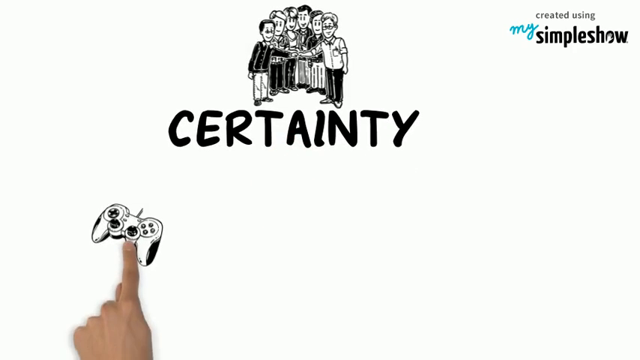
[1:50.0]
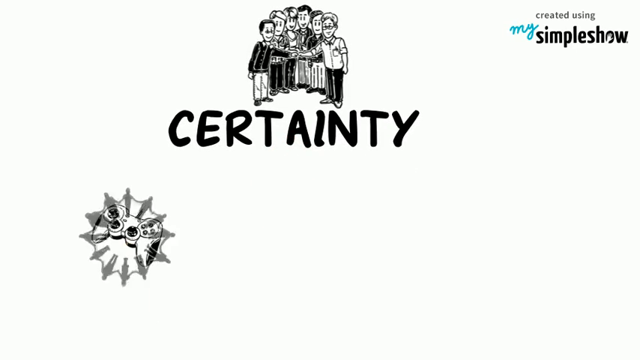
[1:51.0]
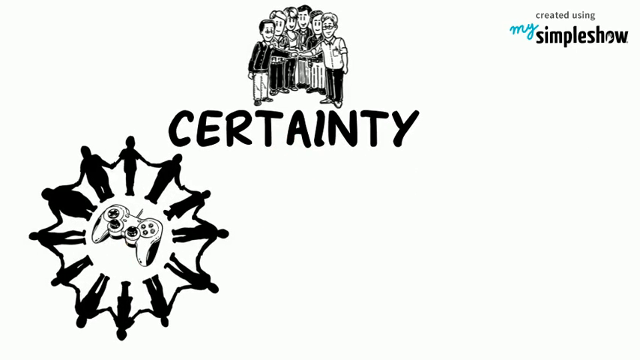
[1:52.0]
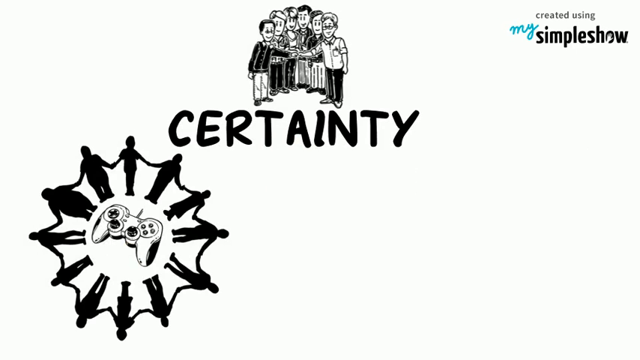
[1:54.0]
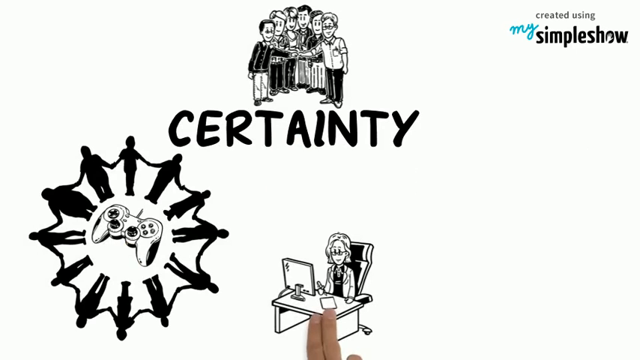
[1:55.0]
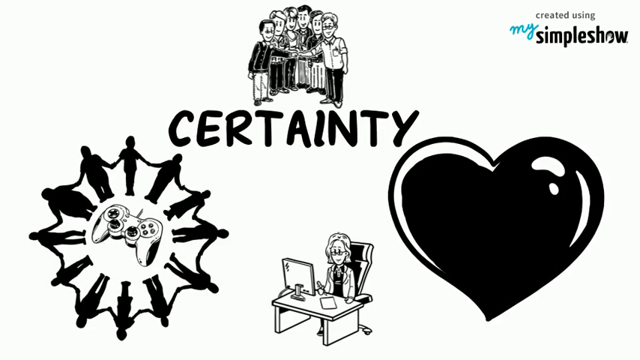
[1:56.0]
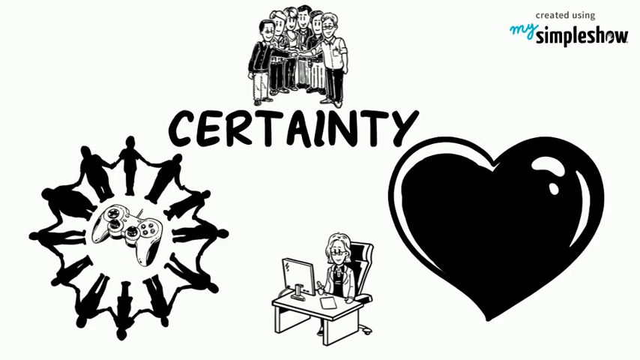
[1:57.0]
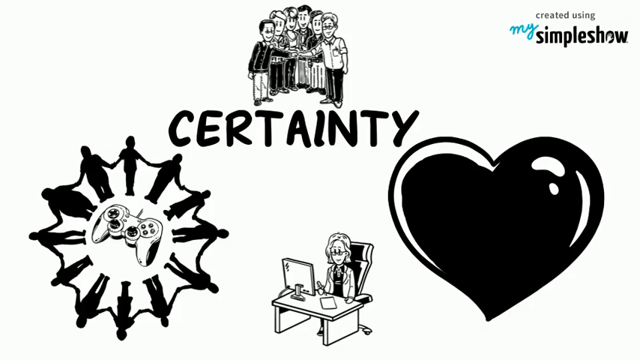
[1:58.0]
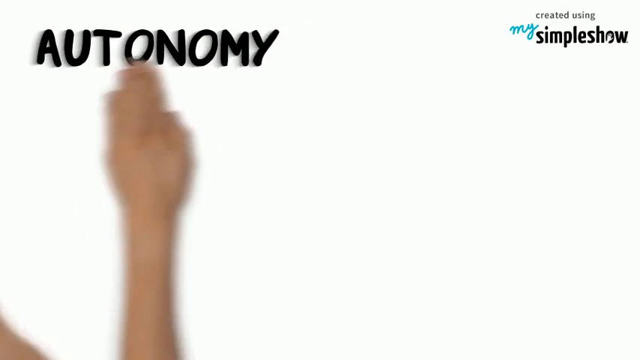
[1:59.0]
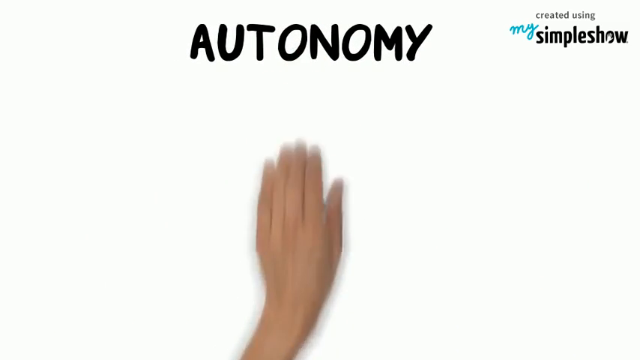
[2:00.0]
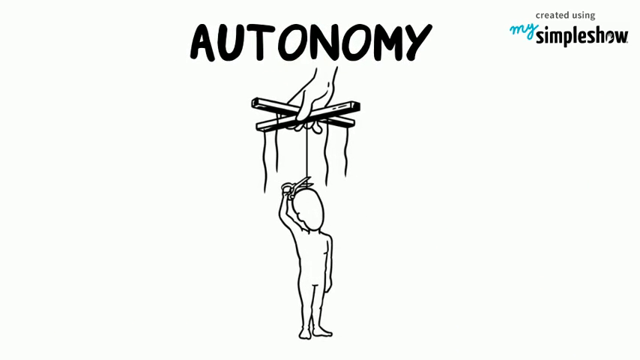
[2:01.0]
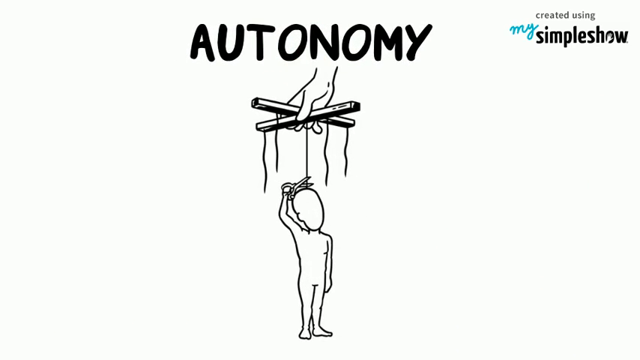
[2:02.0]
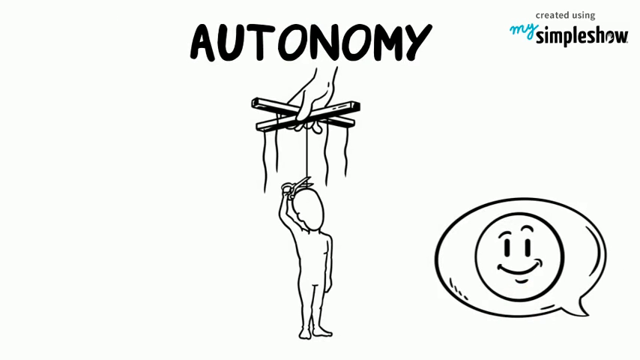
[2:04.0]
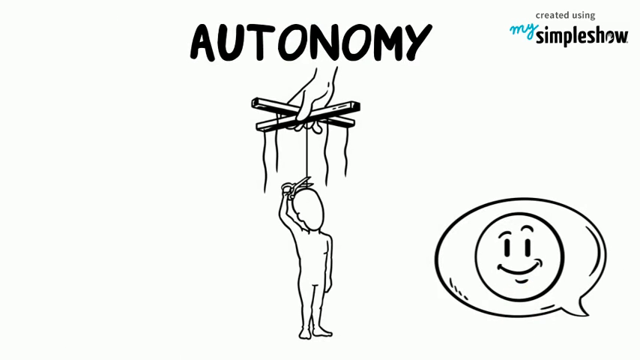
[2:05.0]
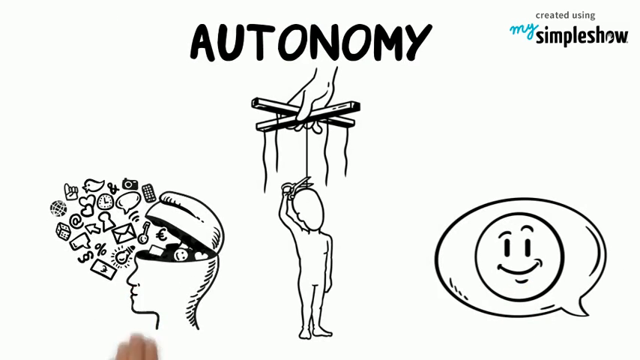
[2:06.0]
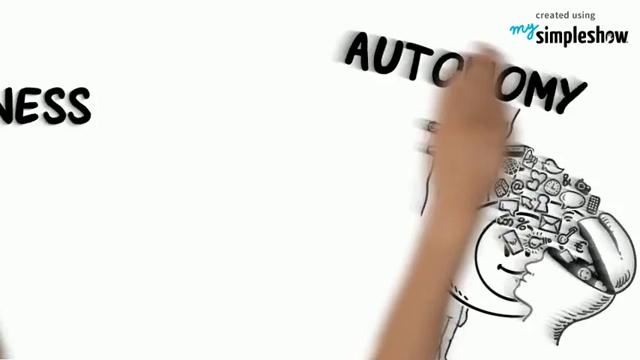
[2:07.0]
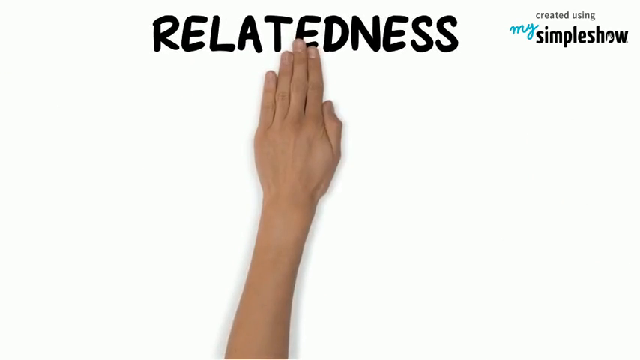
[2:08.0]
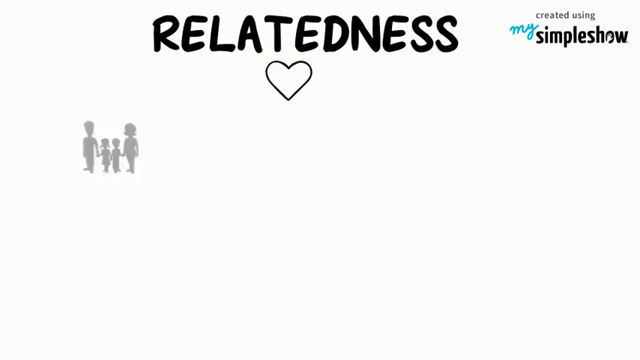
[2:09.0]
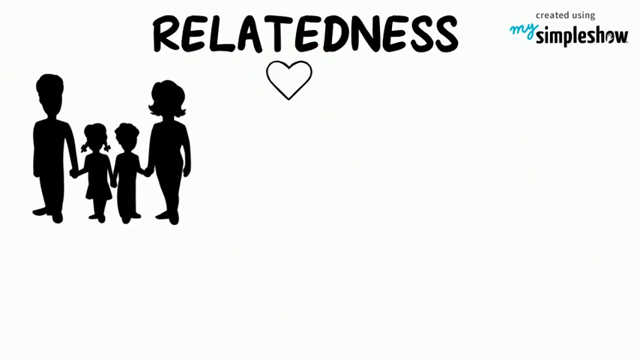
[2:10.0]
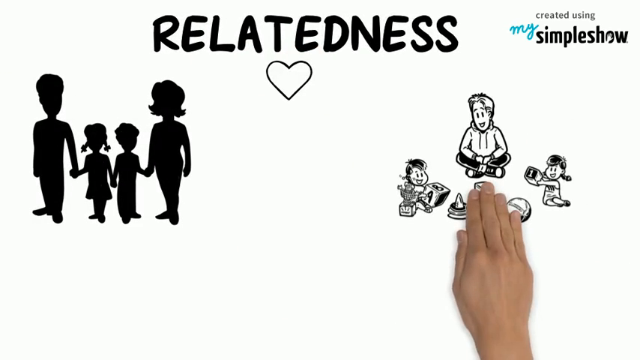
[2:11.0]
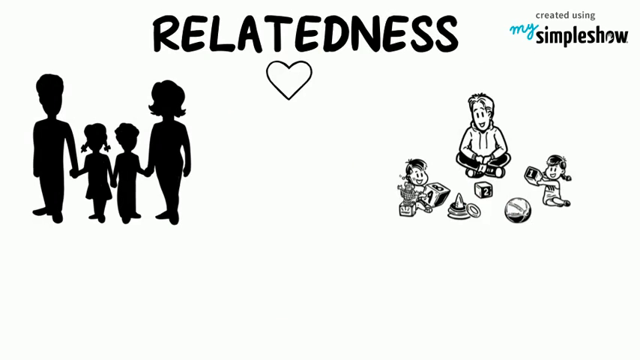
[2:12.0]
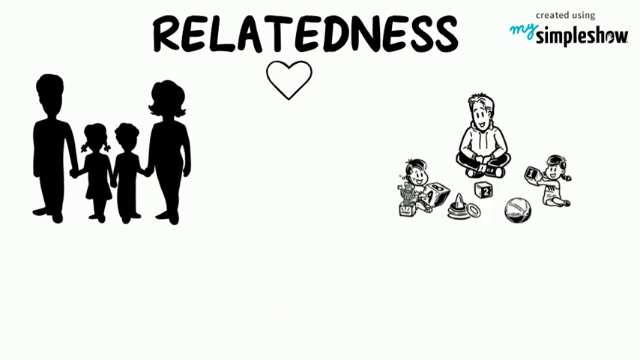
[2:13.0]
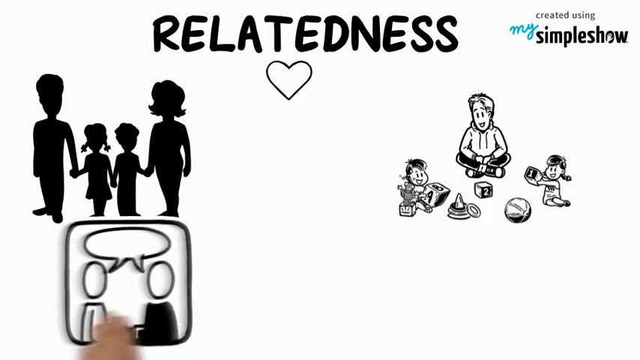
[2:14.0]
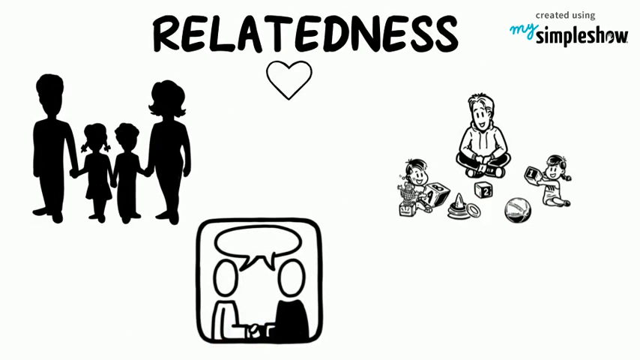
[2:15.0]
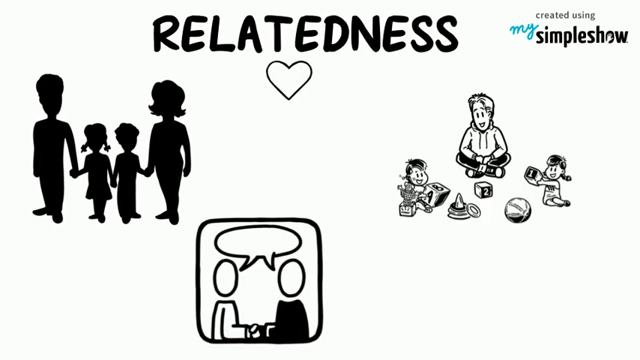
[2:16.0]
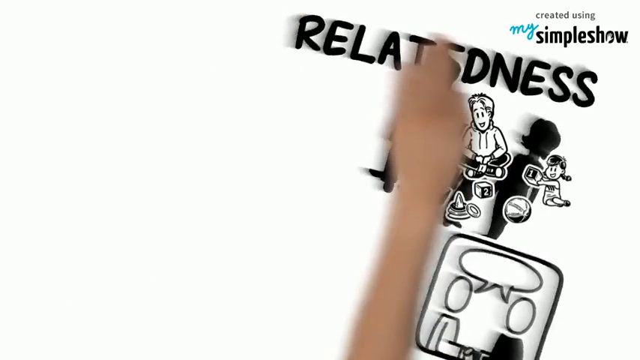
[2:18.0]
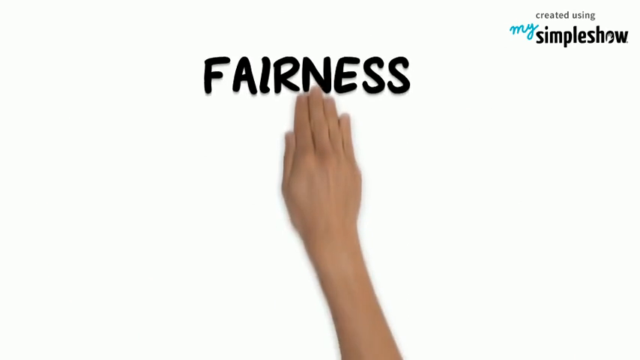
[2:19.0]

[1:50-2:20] Figures of individuals, men and women but mostly men, stretch out their hands in union or solidarity. Another image shows people holding hands together in a circle, with what seems to be a games console in the middle. Next comes the word "certainty." A woman sits in front of a computer, and another figure that seems to be a love figure appears. A hand swipes these away. Then the word "autonomy" appears. Below it, a woman's finger displays a hand holding some words, and another figure seems to be holding scissors above its head. Another figure looks like a smiley in a quotation figure. A person's head has many items coming out of it, such as a bed, a clock, an envelope, a bulb and an at sign. Another scene shows a man and a woman with two children between them, a boy and a girl, with "relatedness" in the middle of the scene. A woman sits with little figures, a boy and a girl, and there is a quotation with two people inside. Then the hand swipes out again.